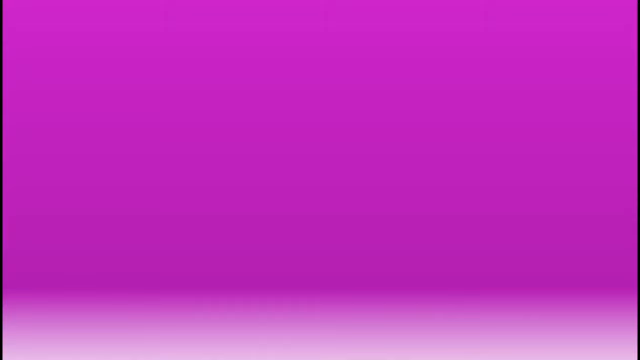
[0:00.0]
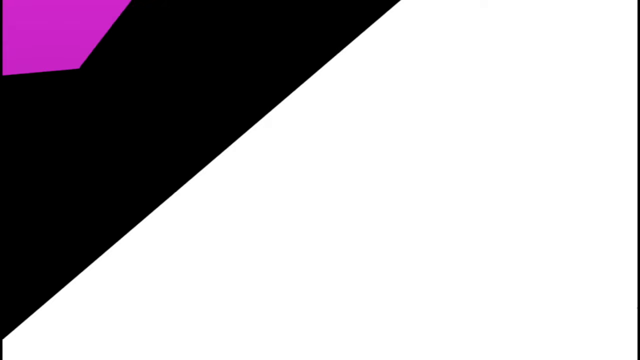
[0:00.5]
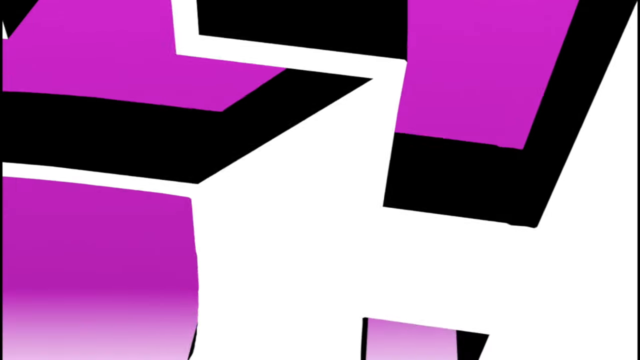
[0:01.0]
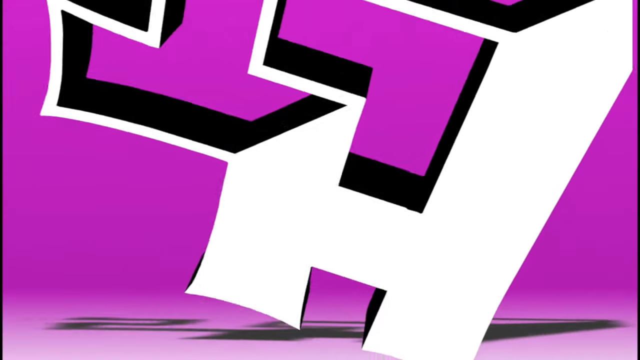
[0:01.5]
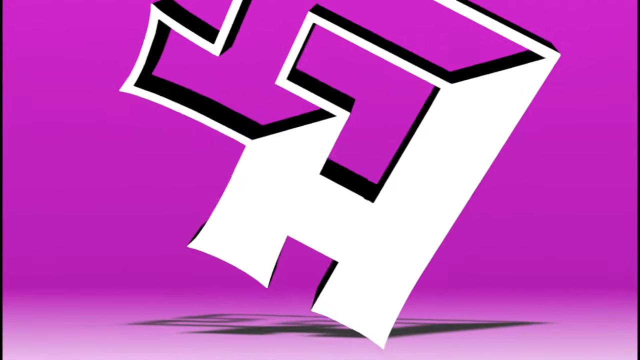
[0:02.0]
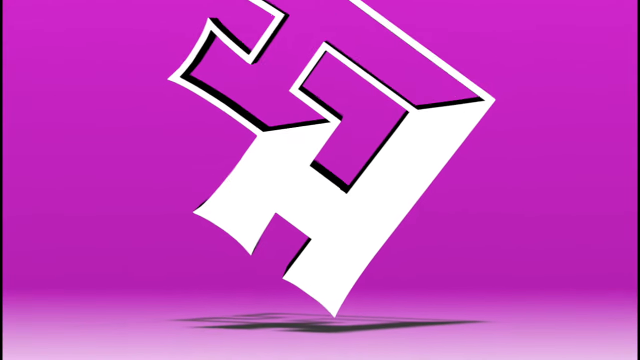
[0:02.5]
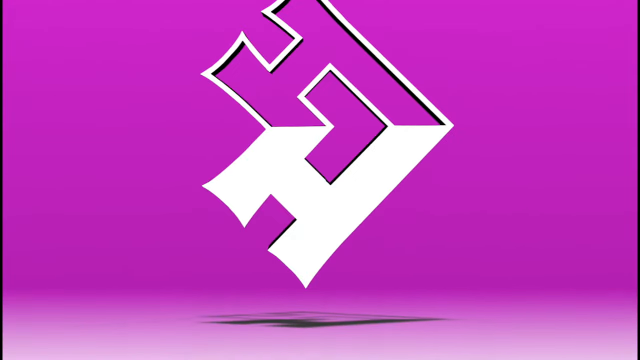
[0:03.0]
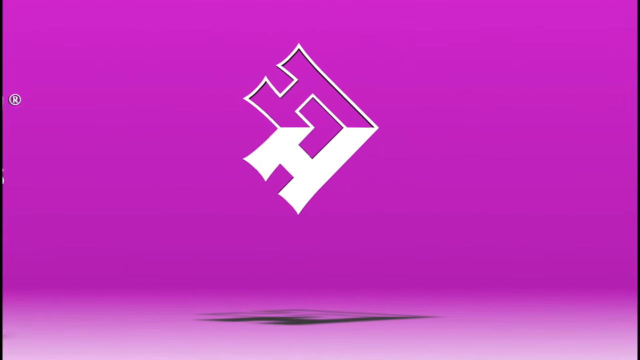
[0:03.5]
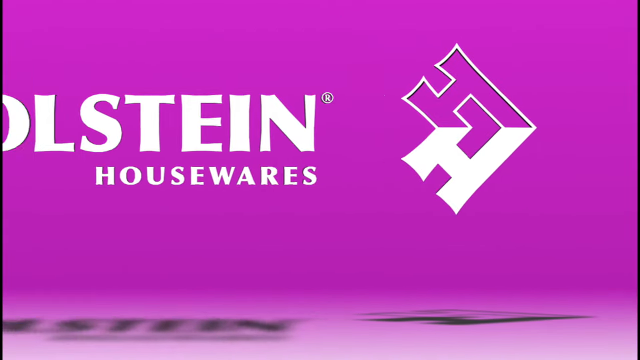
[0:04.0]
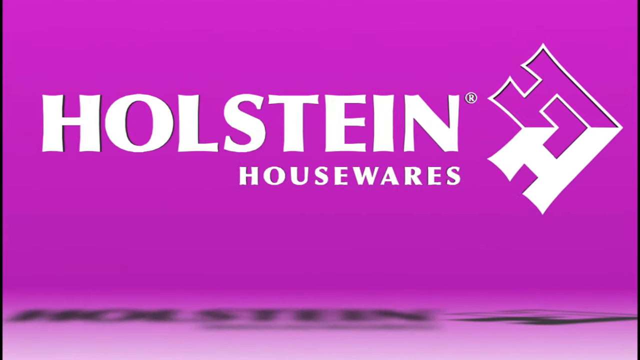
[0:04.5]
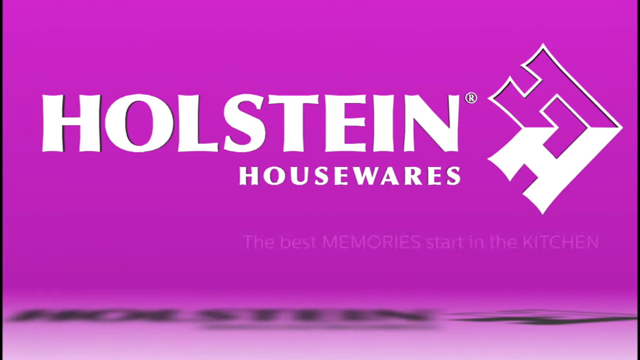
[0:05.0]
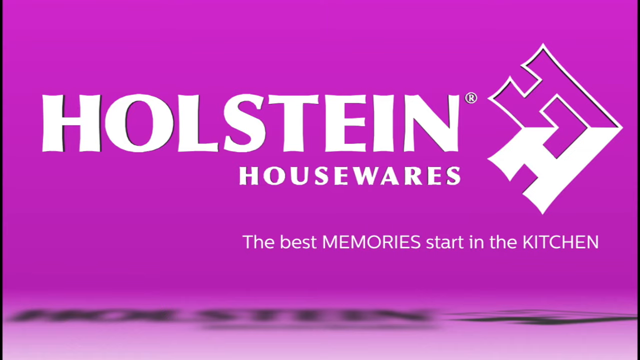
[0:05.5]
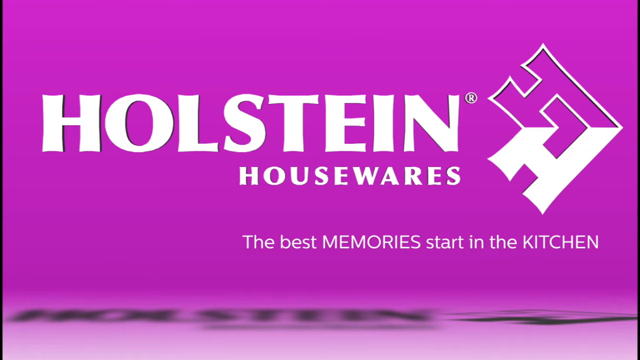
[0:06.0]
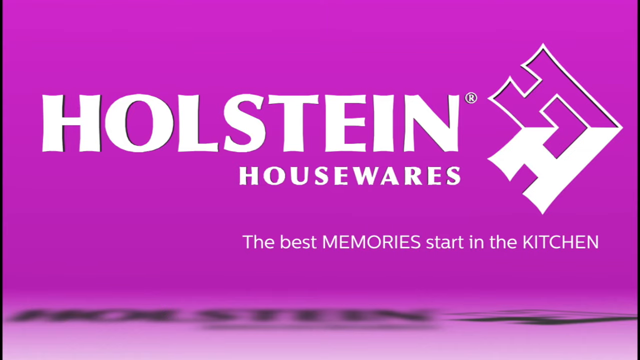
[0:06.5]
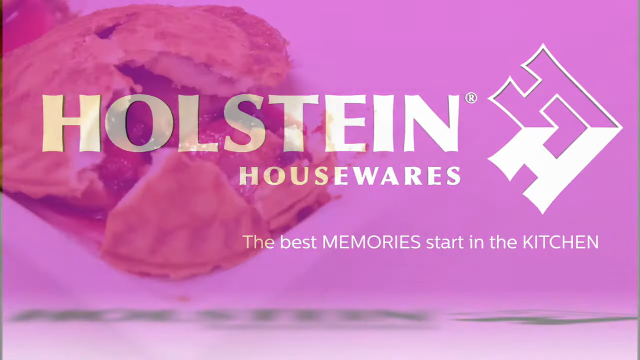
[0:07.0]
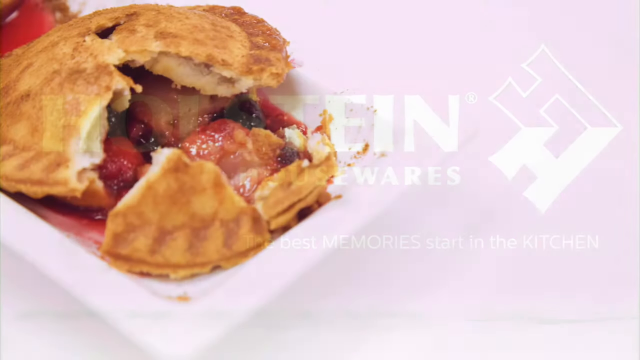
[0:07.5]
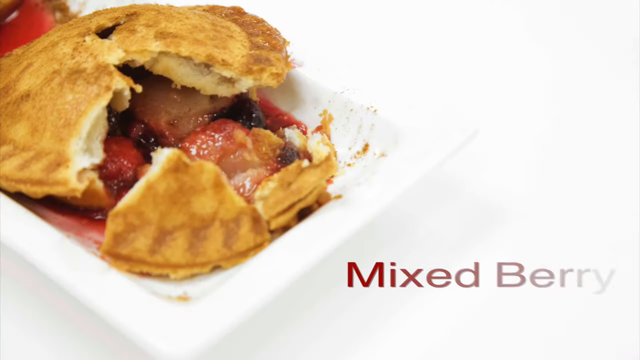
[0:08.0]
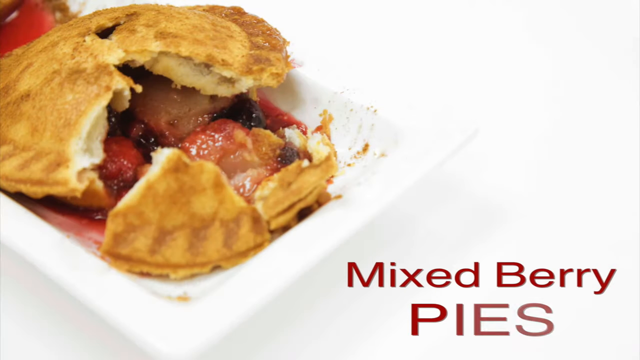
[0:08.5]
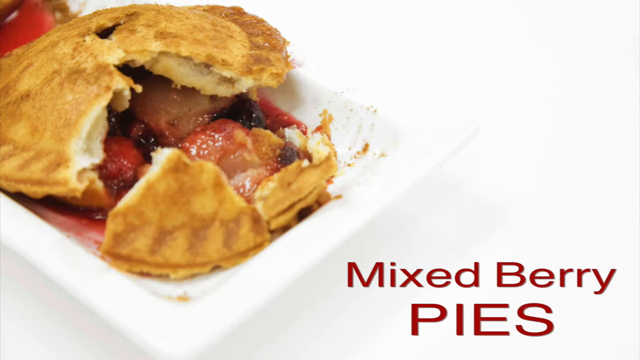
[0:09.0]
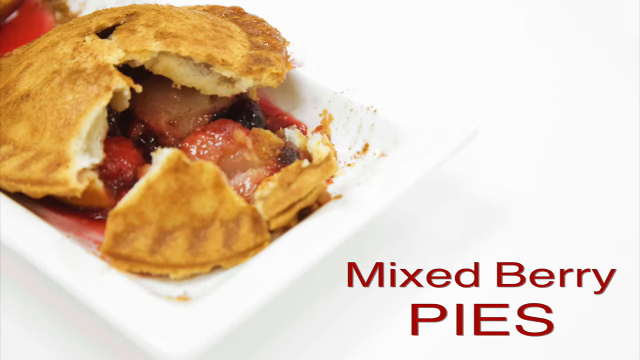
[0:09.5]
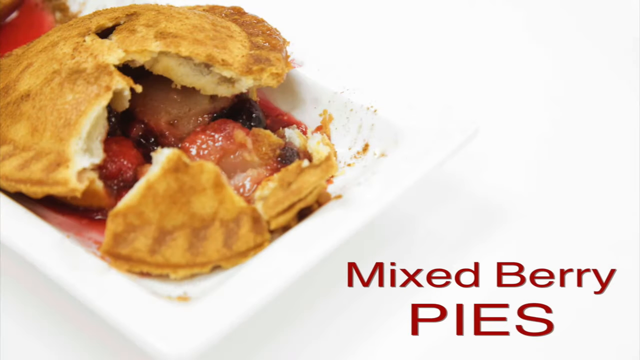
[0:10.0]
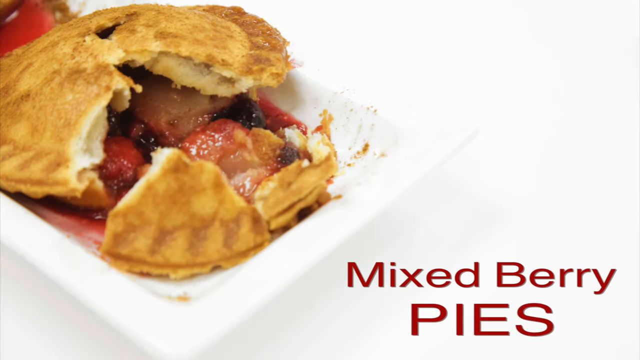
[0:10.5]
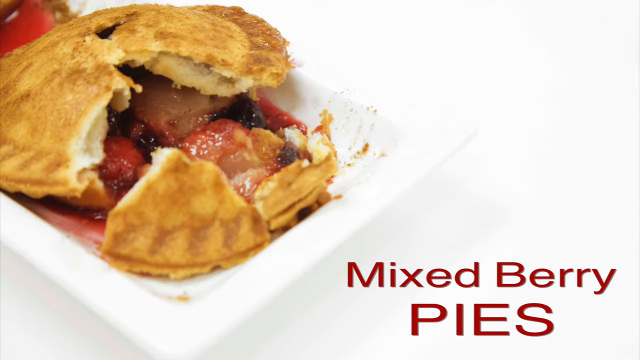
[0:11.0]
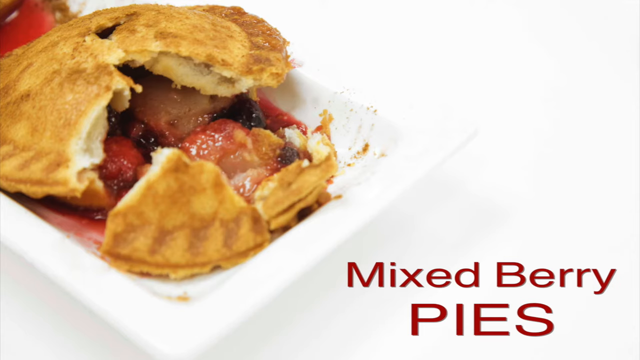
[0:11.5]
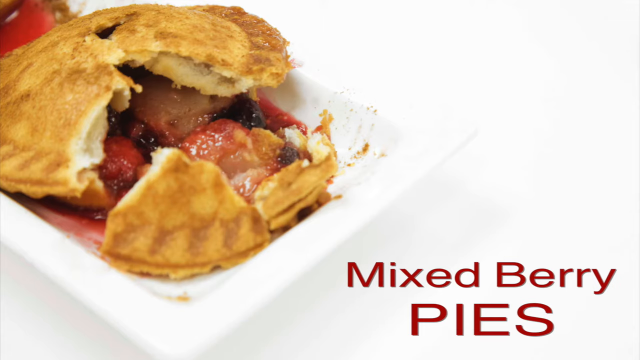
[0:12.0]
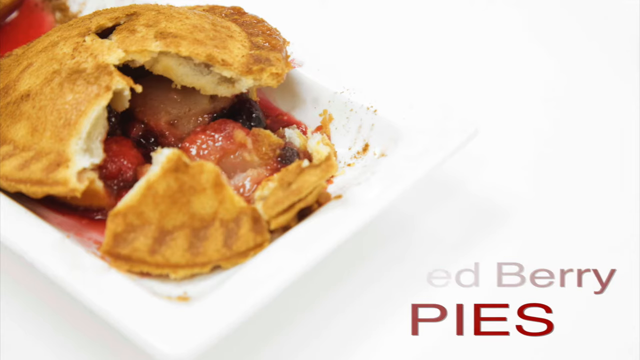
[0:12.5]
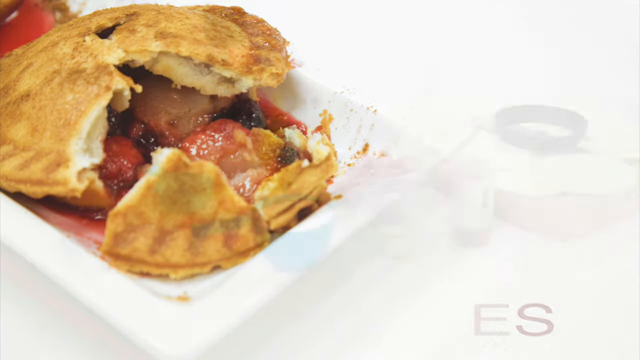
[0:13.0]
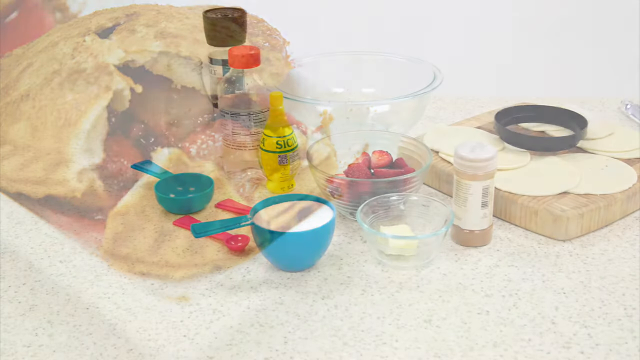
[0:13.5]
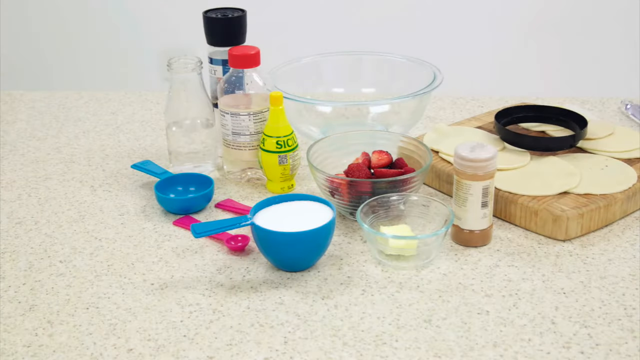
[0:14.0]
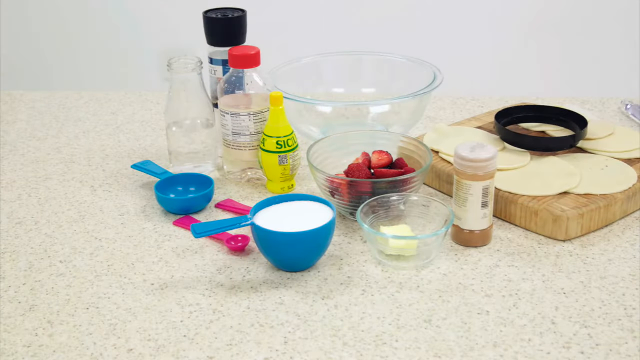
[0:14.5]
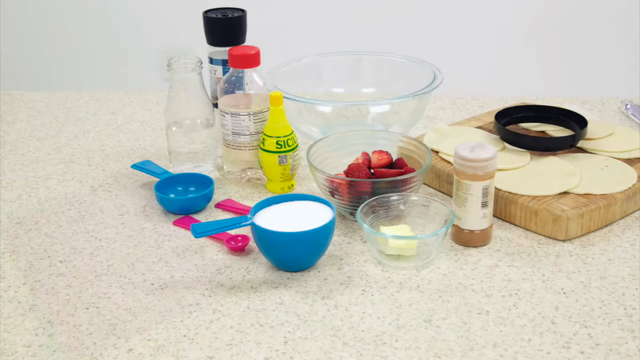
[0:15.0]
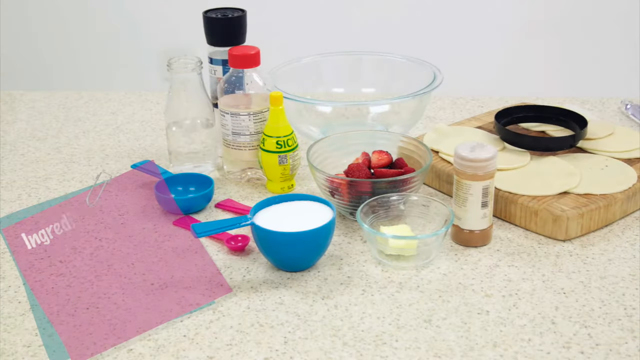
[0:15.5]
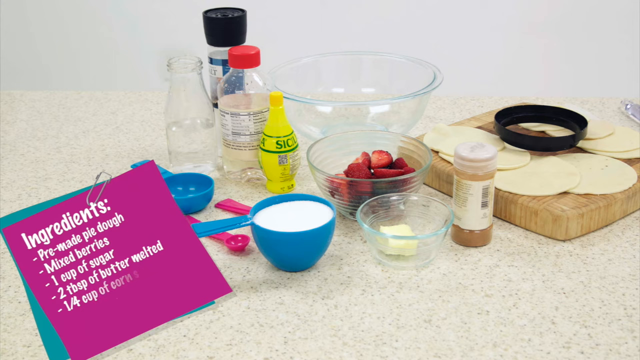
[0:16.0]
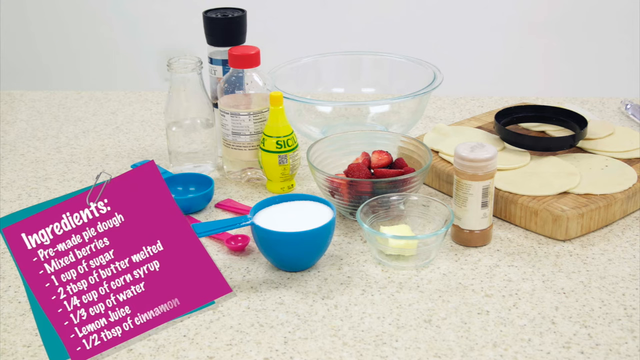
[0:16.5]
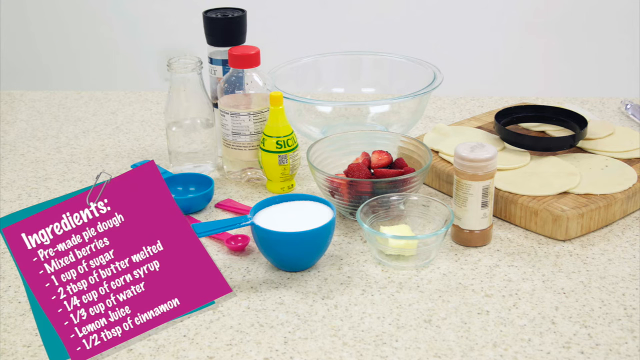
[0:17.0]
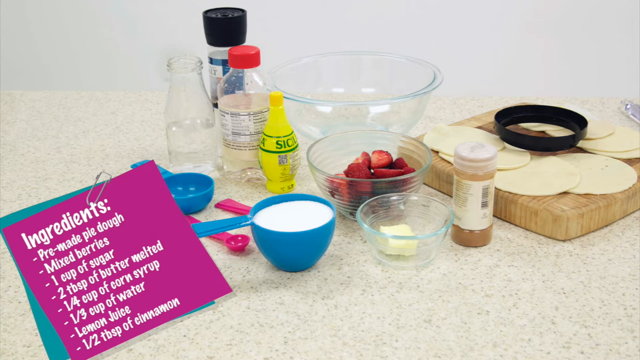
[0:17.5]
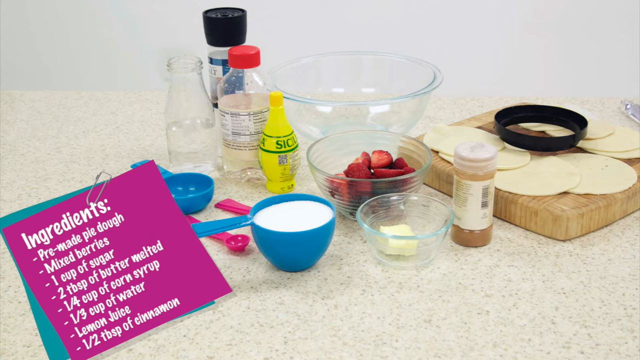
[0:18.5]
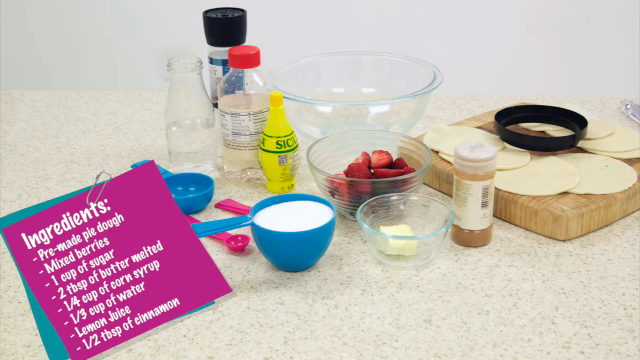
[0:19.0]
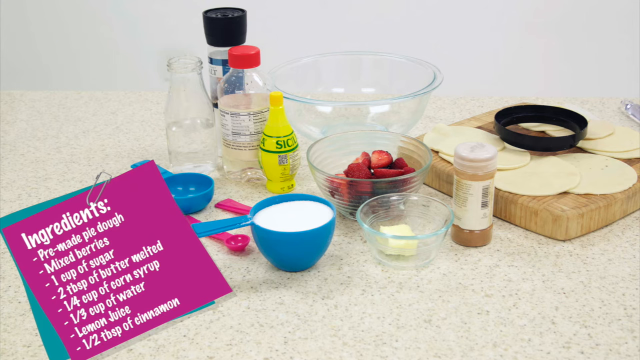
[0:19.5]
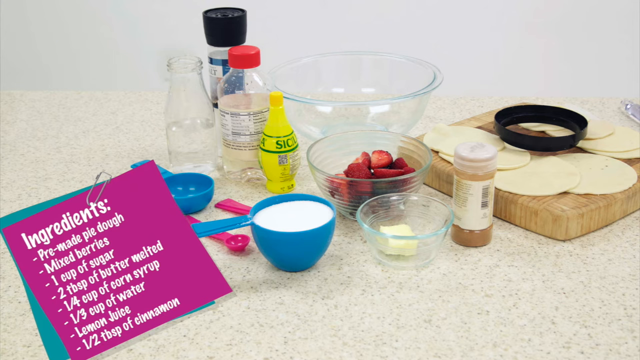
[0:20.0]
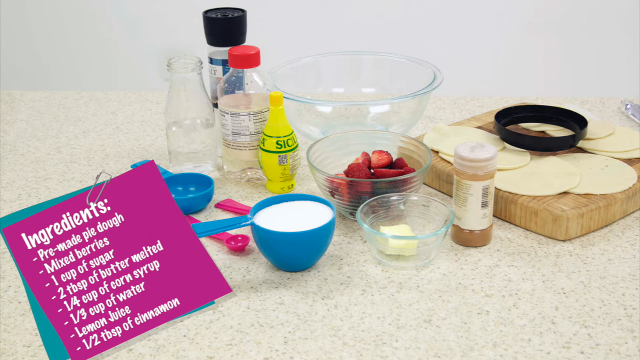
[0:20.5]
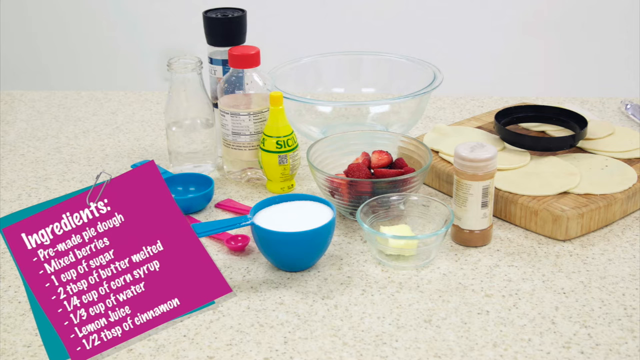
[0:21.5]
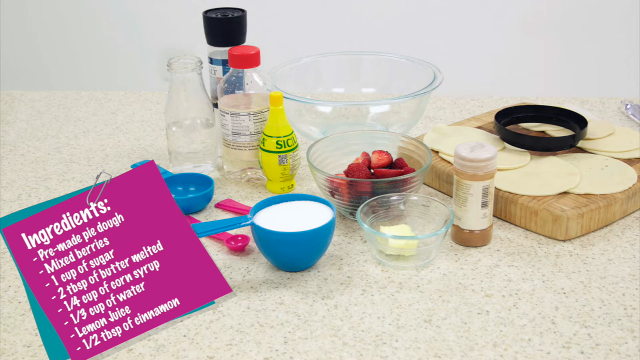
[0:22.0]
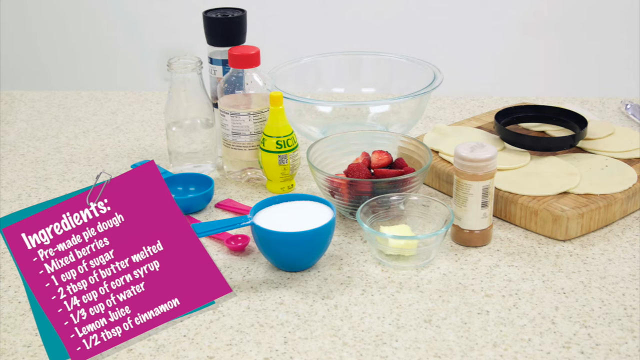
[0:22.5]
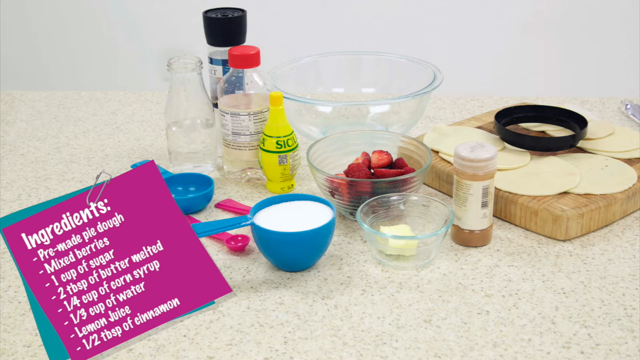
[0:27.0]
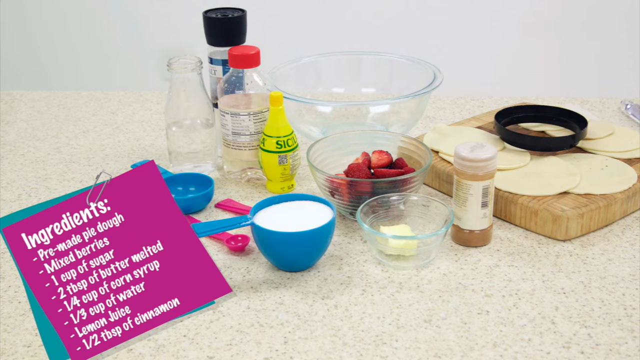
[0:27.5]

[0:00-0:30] The video opens with what seems to be a company logo reading "Horsetail Housewares," followed by the slogan "their best memories start in the kitchen." Mixed berry pies are shown next; one pie is cut so its inside is visible. It looks to be a fruit pie, with what appear to be some strawberries and apples inside. After the picture of the pies, the ingredients used to make the pie are shown: pre-made pie dough, mixed berries, one cup of sugar, two tablespoons of melted butter, a quarter cup of corn syrup, a third of a cup of water, lemon juice, and half a tablespoon of cinnamon.